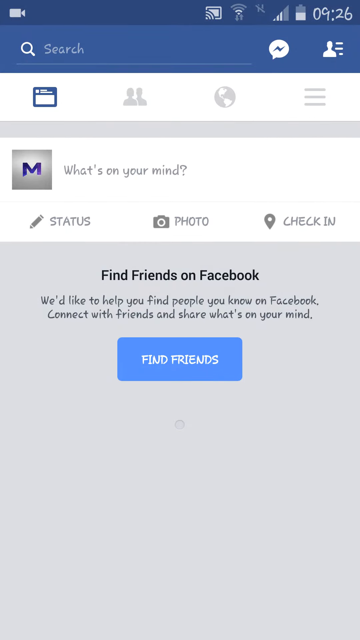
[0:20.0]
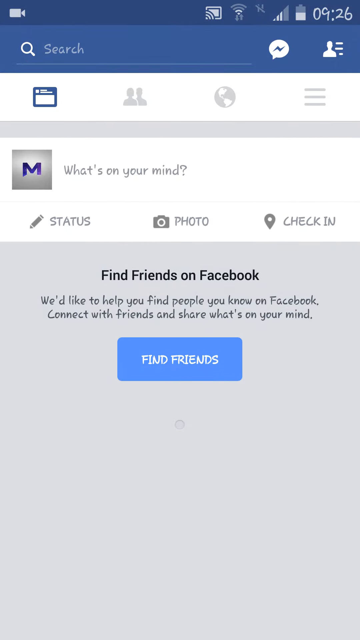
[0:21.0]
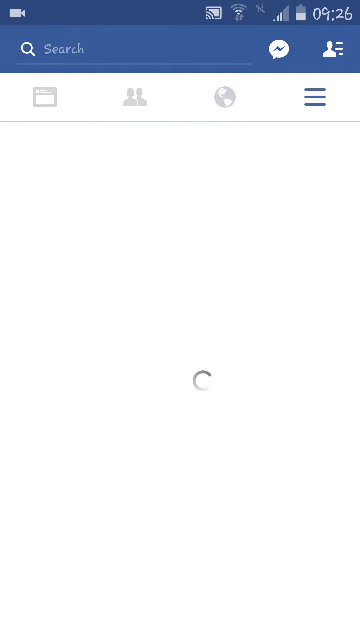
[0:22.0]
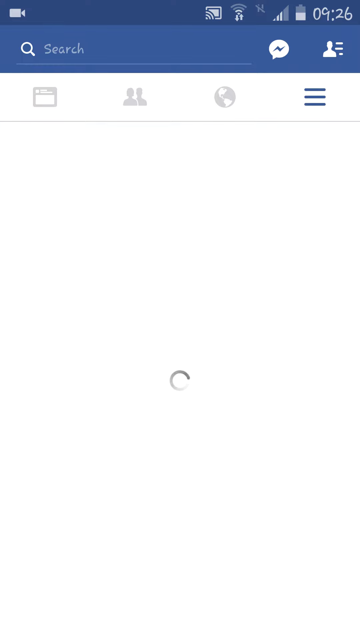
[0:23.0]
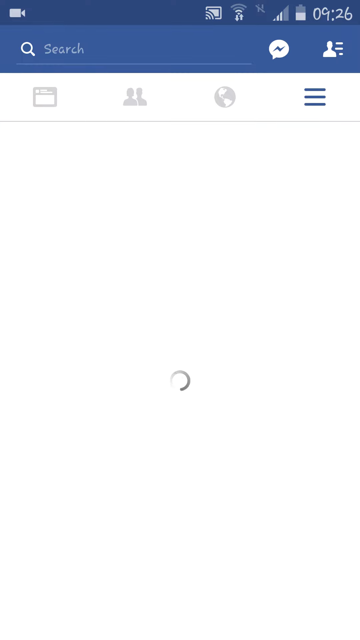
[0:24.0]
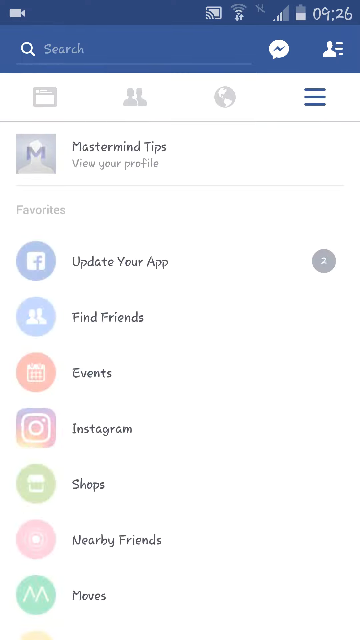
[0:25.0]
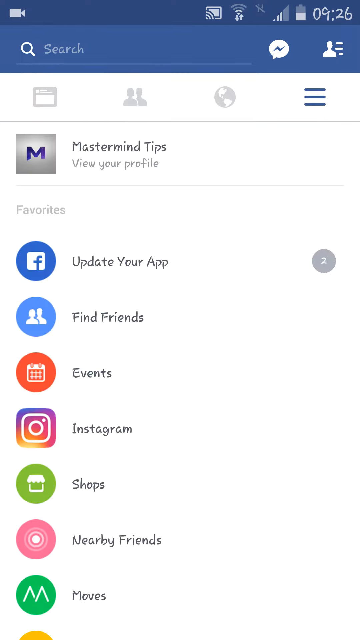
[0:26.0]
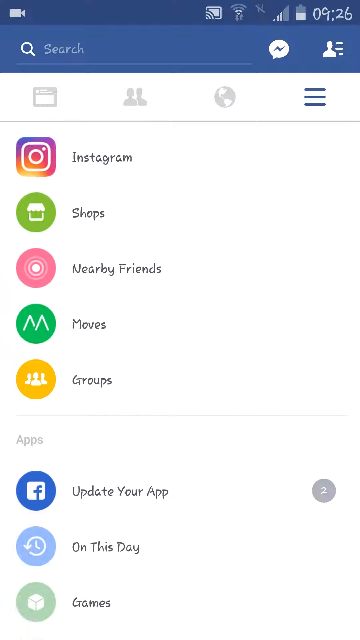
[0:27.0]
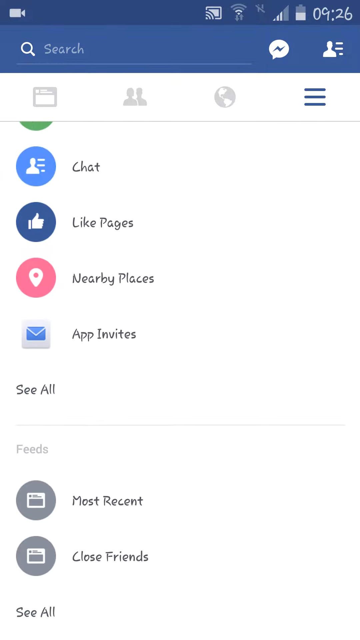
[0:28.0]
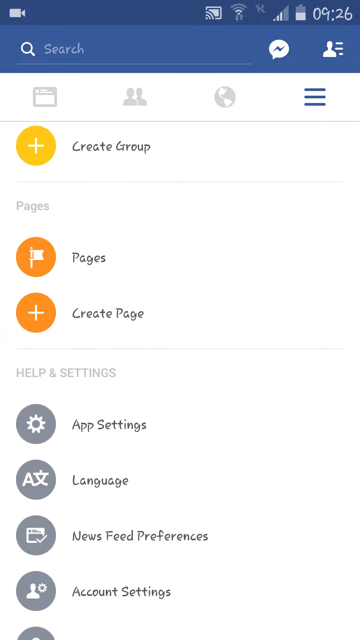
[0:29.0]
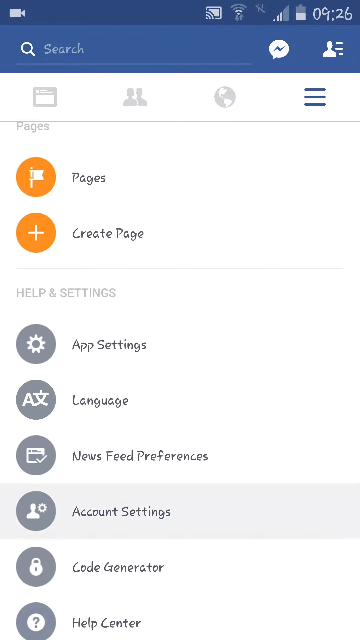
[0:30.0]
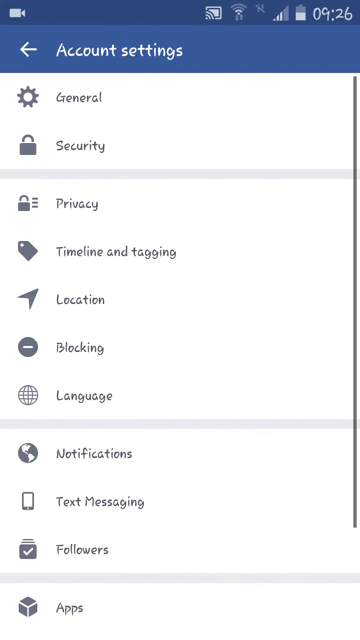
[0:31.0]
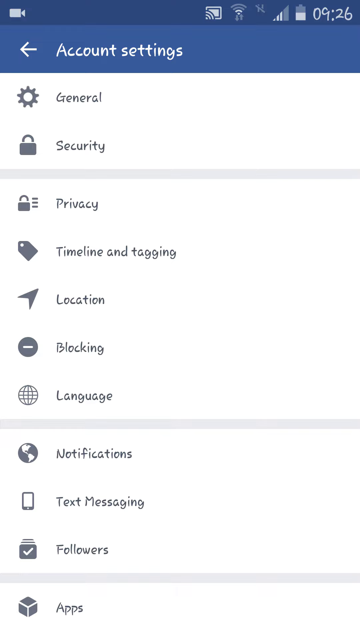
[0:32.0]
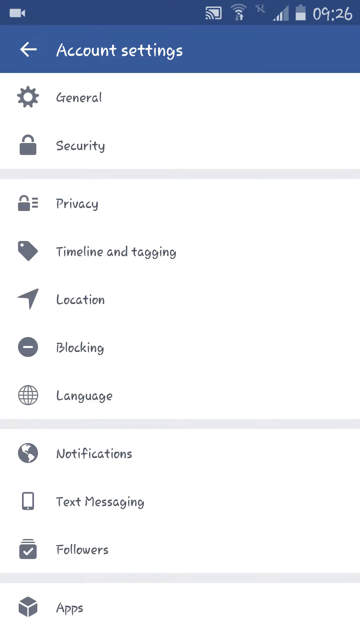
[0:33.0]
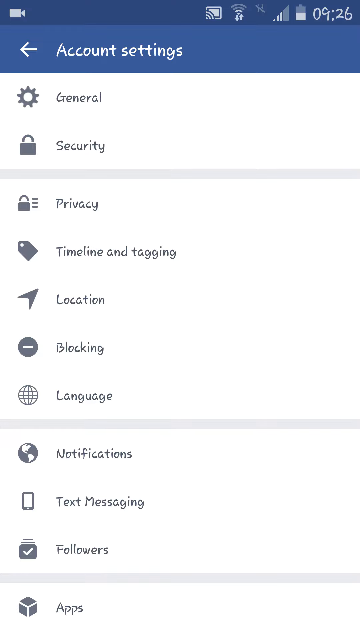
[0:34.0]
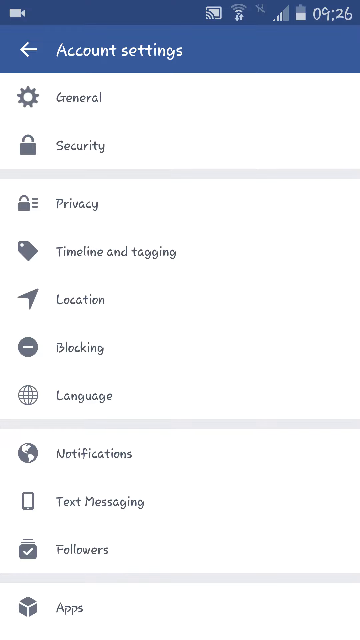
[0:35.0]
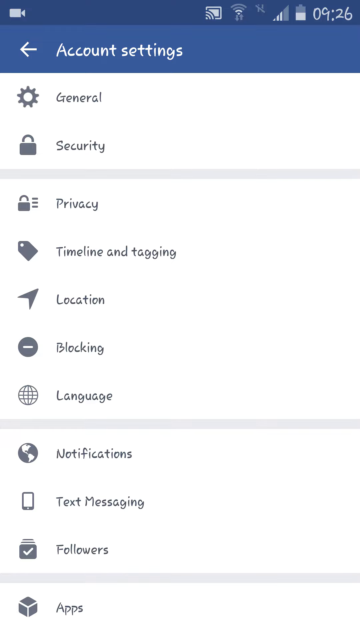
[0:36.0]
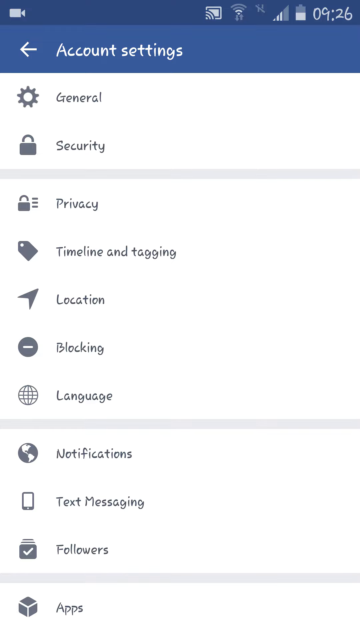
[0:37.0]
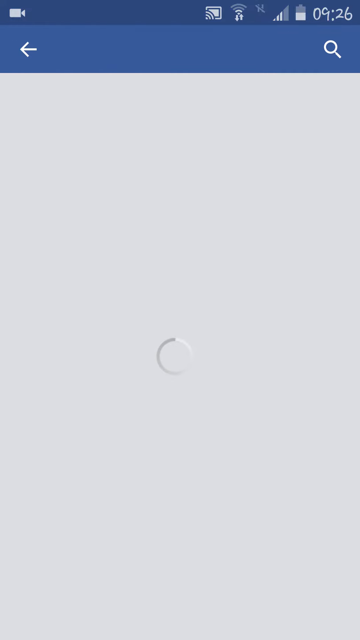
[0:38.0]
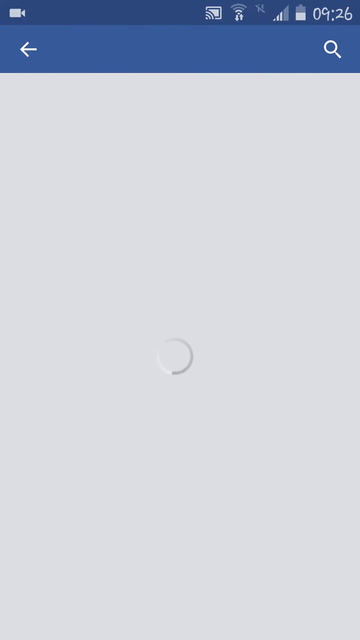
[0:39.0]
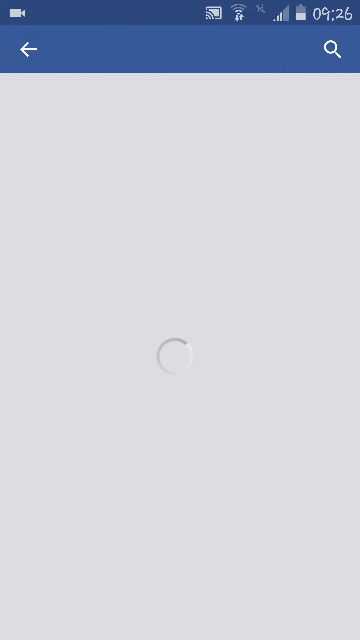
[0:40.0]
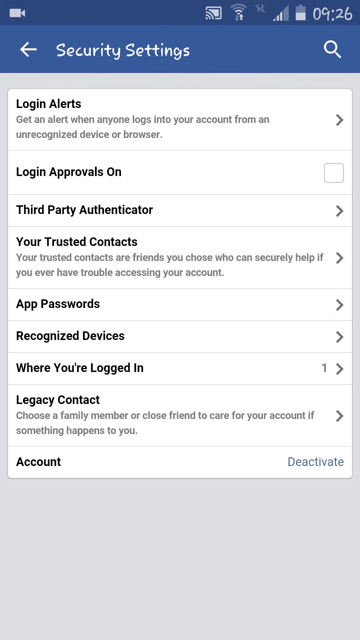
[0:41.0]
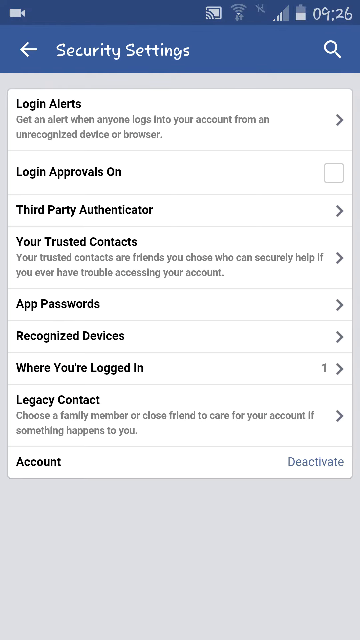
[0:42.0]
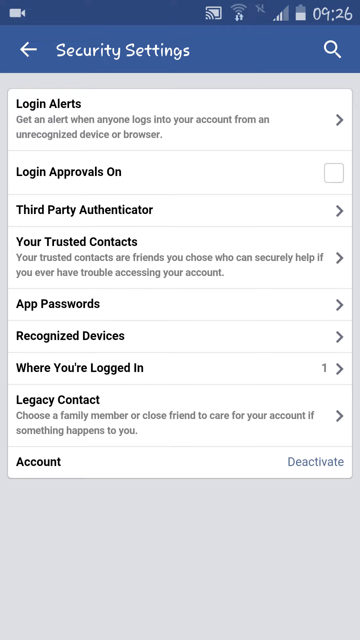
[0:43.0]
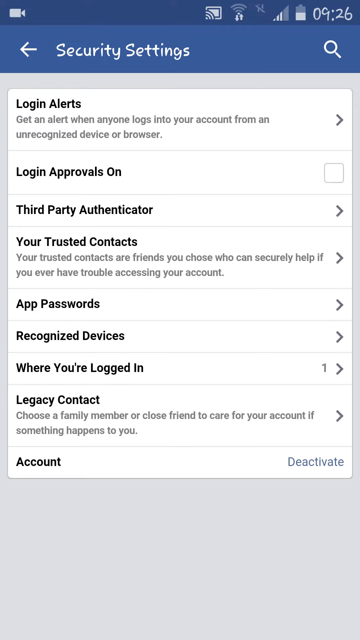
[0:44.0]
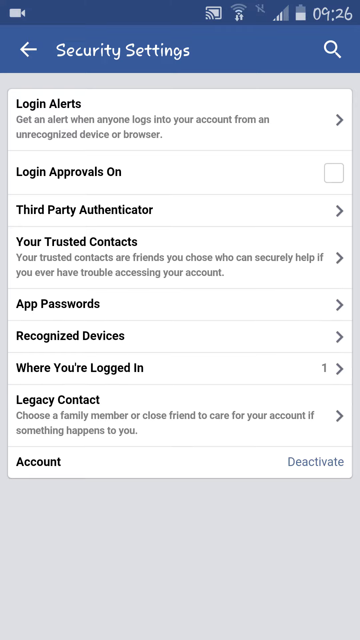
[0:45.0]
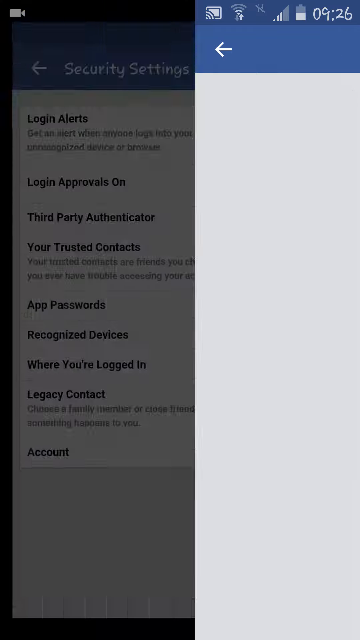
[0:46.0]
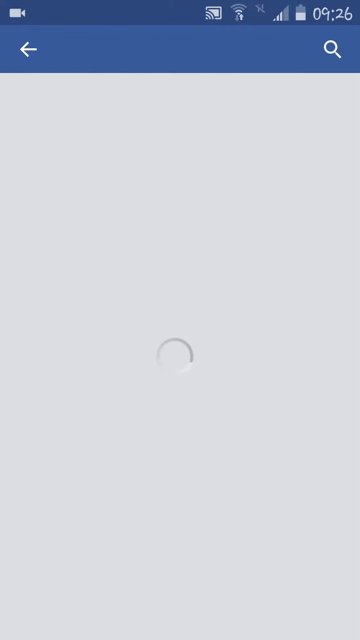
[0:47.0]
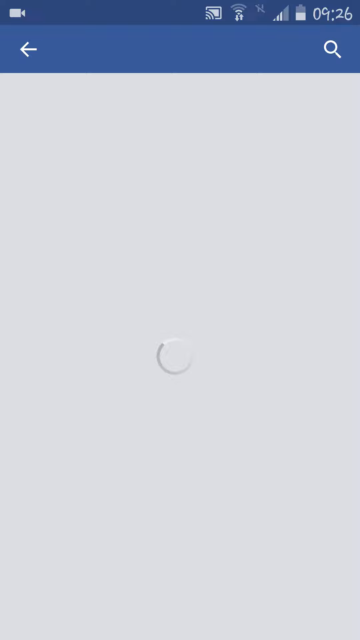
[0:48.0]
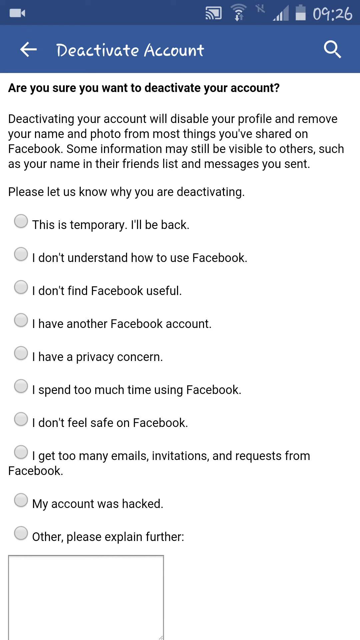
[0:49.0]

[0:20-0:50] The Facebook app is open on a cell phone. Cell phone icons are at the top, a search bar is below them, then some Facebook icons, then a place to write a status update. There is an M, and to its right it says "what's on your mind"; beneath that are "status" with a little pencil symbol, "photo" with a little camera and "check in" with a little location symbol. At the very bottom is a large gray rectangle that says "find friends on Facebook" and "we'd like to help you find people you know on Facebook, connect with friends, and share what's on your mind", with a blue "find friends" button. The phone user taps a little hamburger symbol on the right side, and a screen appears that says "mastermind tips" and "view your profile", followed by favorites with a column of icons: a Facebook icon reading "update your app", then "find friends", "events", an Instagram icon, "shops", "nearby friends" and "moves". The person scrolls down to reveal more icons and keeps scrolling, then goes into an account settings area with setting options including general, security, privacy, timeline and tagging, and location. The screen shifts to a loading screen and then shows the security settings: login alerts, login approvals, third-party authenticator, your trusted contacts, app passwords, recognized devices, where you're logged in, legacy contact, and account information. The person then taps deactivate account and goes into that section.